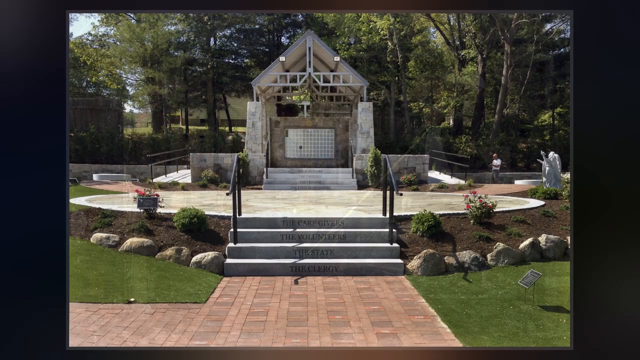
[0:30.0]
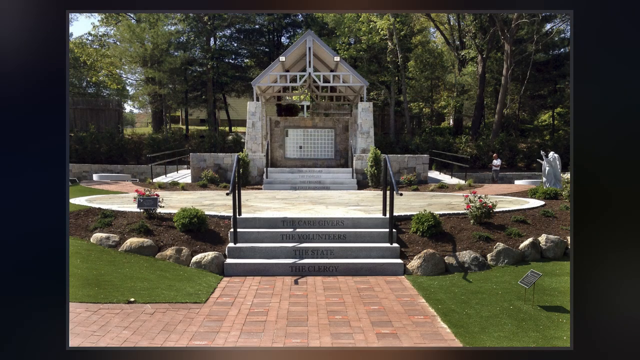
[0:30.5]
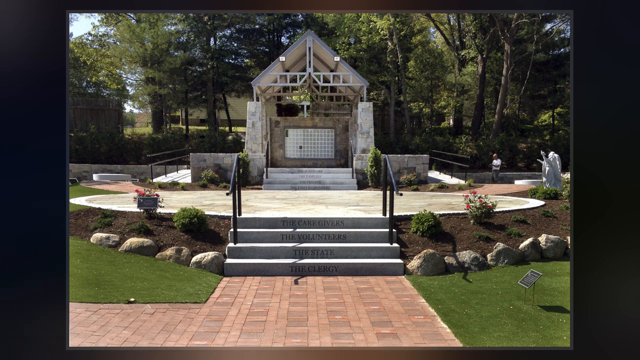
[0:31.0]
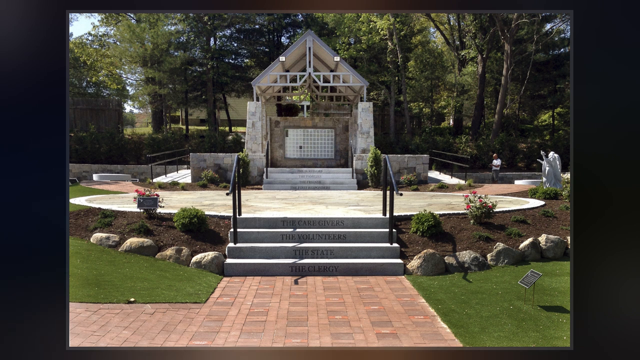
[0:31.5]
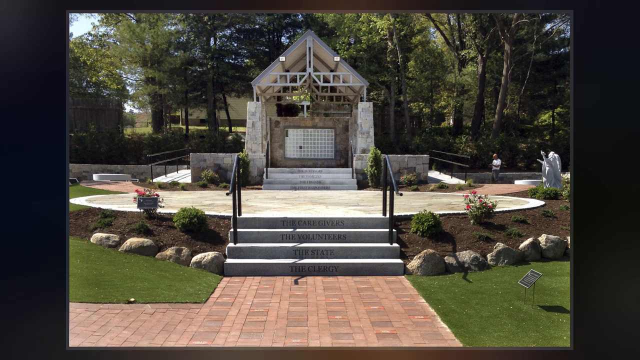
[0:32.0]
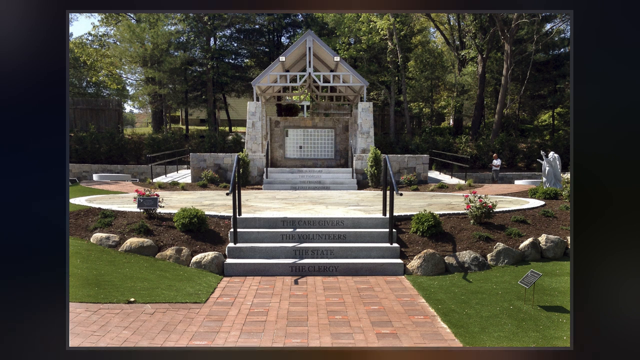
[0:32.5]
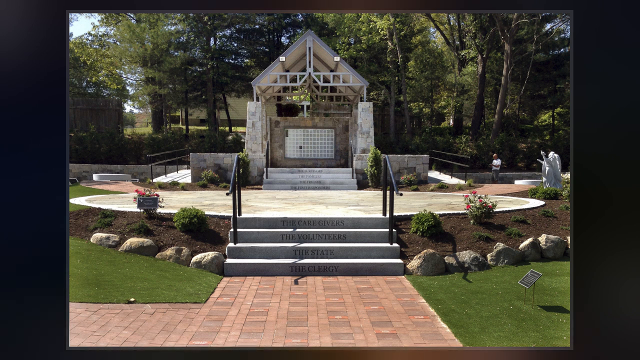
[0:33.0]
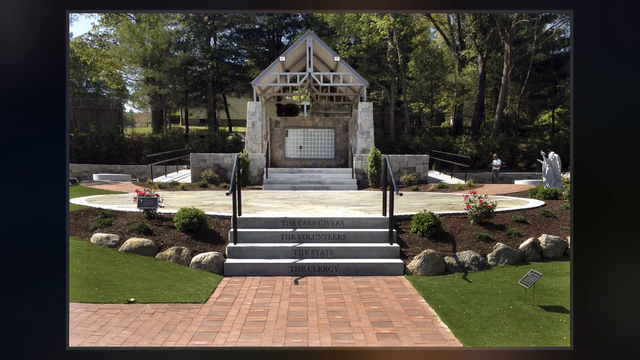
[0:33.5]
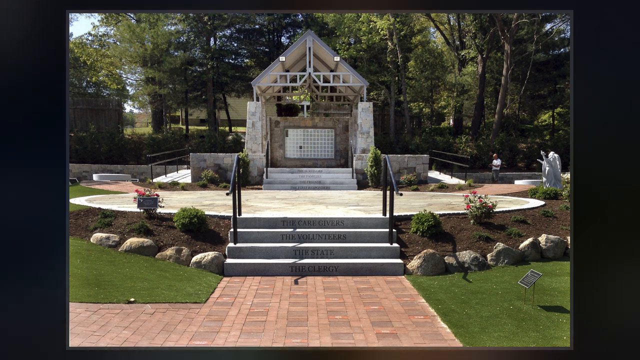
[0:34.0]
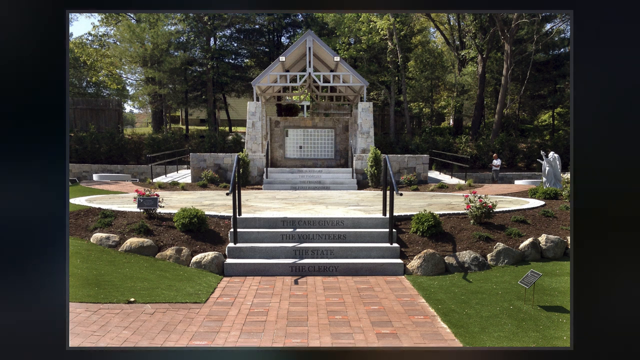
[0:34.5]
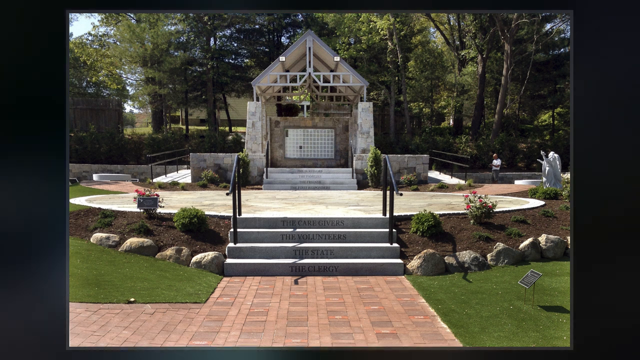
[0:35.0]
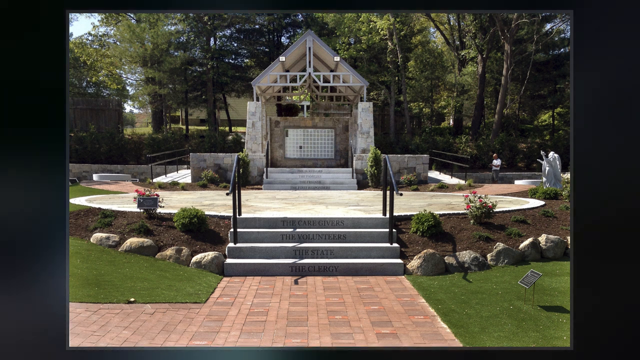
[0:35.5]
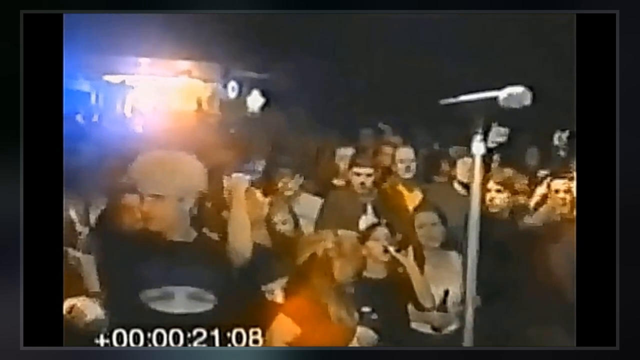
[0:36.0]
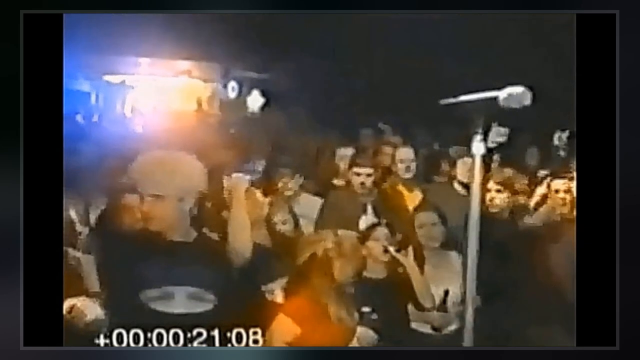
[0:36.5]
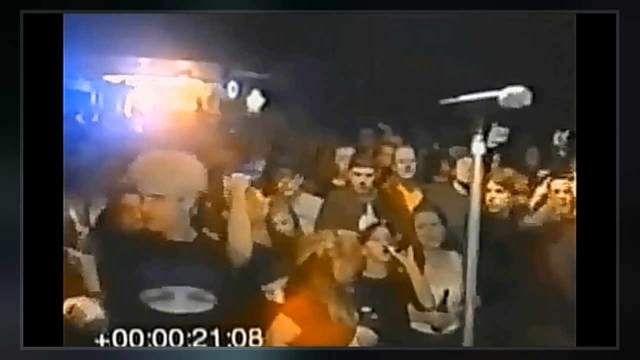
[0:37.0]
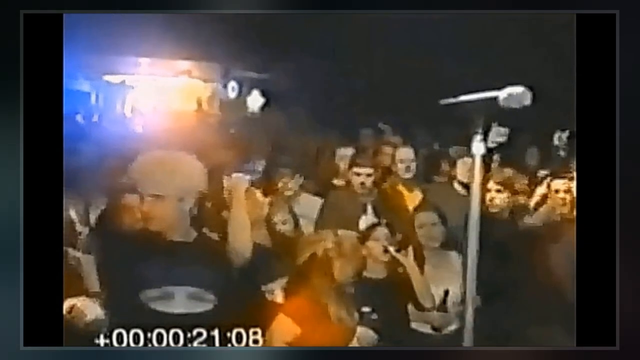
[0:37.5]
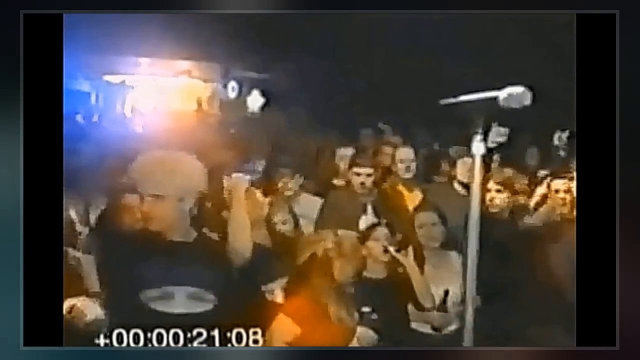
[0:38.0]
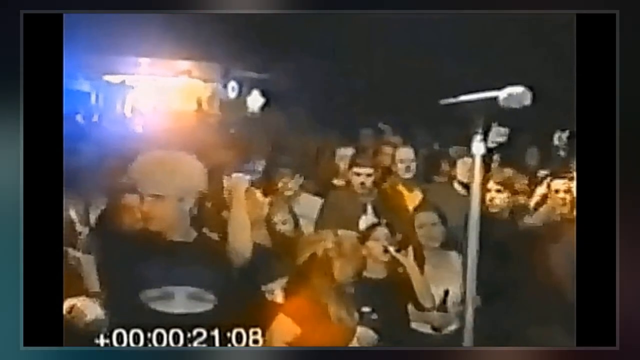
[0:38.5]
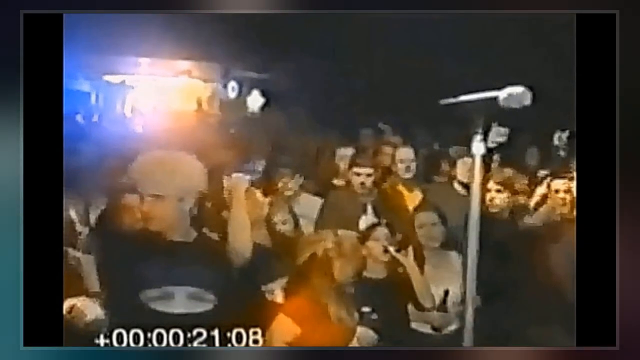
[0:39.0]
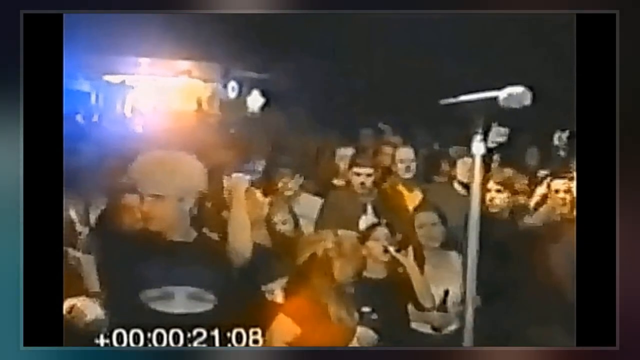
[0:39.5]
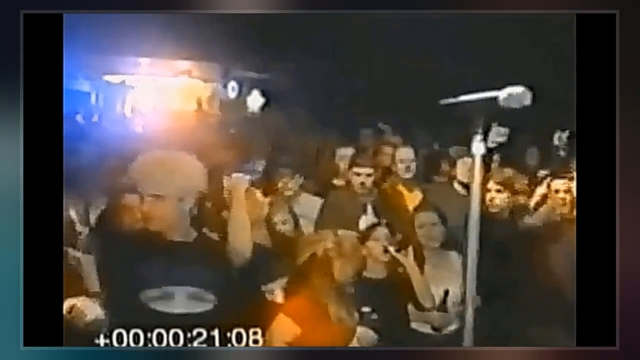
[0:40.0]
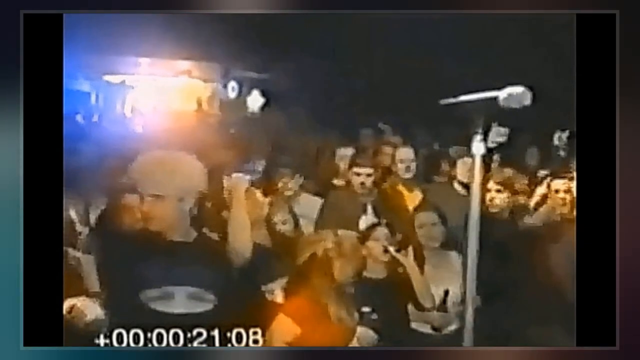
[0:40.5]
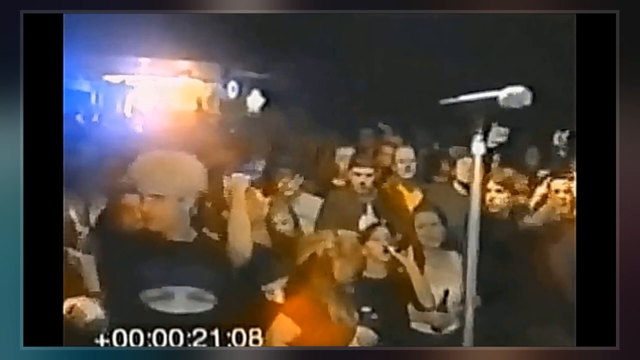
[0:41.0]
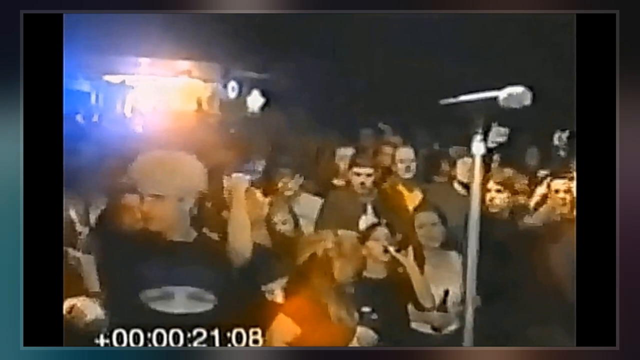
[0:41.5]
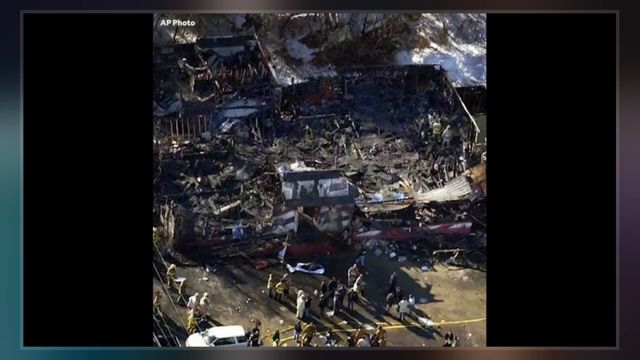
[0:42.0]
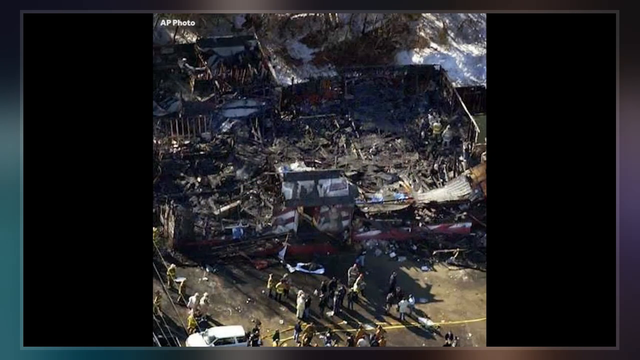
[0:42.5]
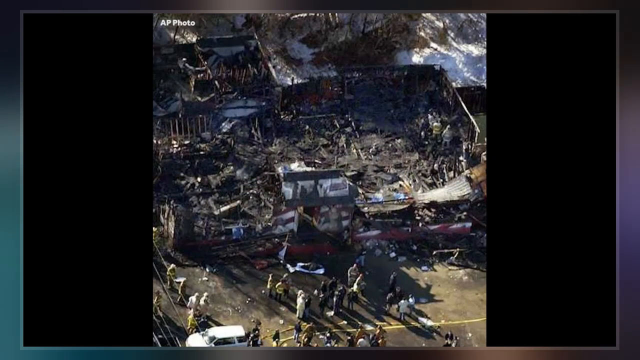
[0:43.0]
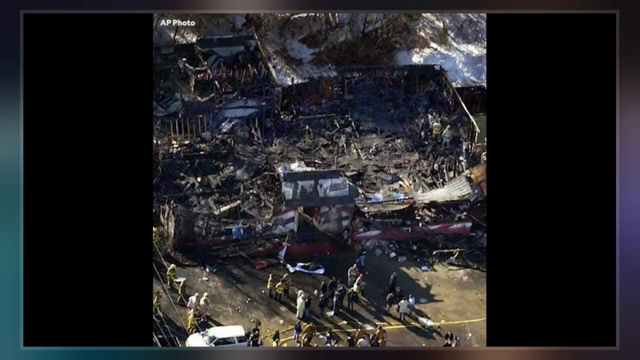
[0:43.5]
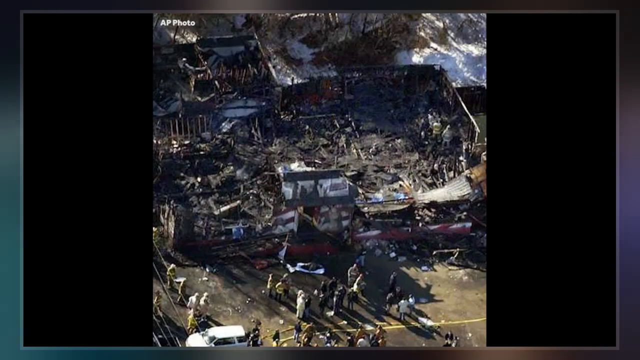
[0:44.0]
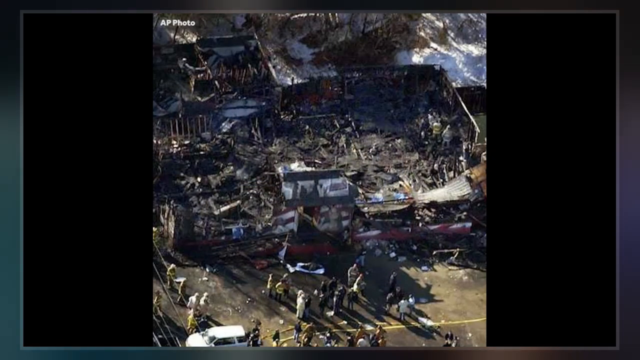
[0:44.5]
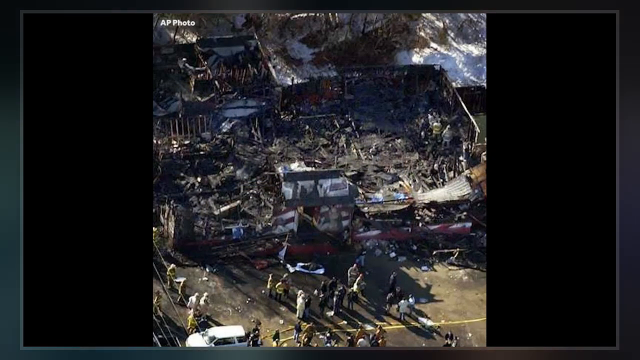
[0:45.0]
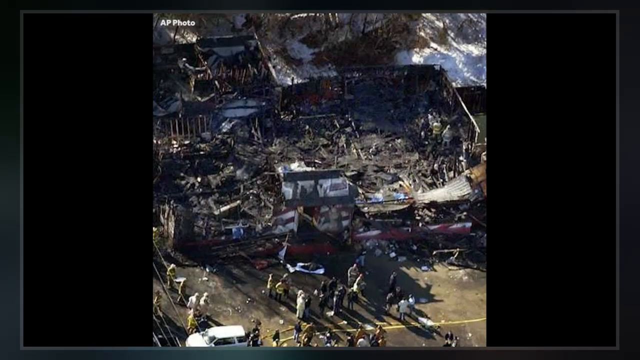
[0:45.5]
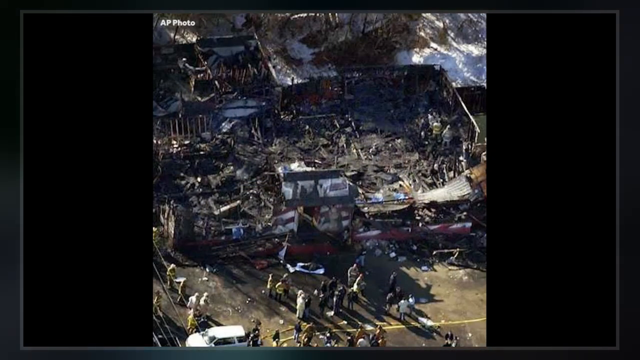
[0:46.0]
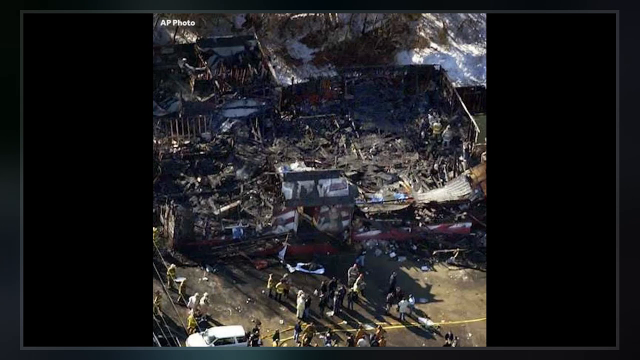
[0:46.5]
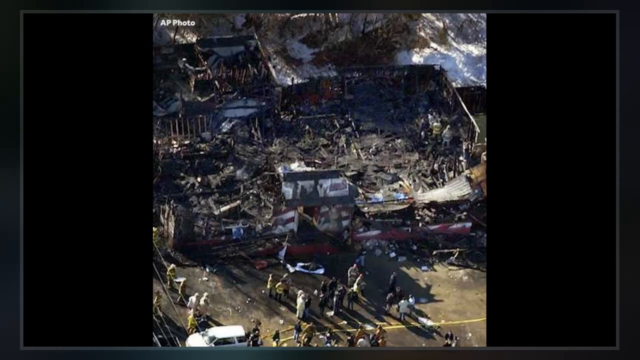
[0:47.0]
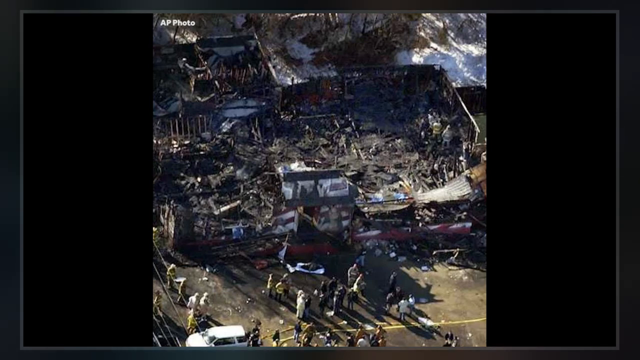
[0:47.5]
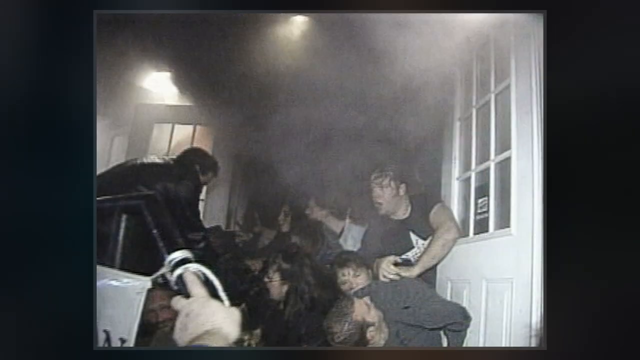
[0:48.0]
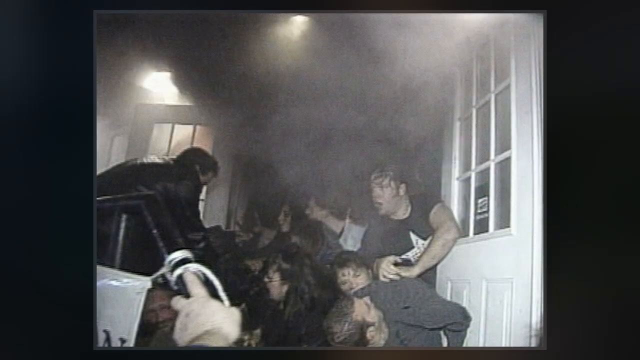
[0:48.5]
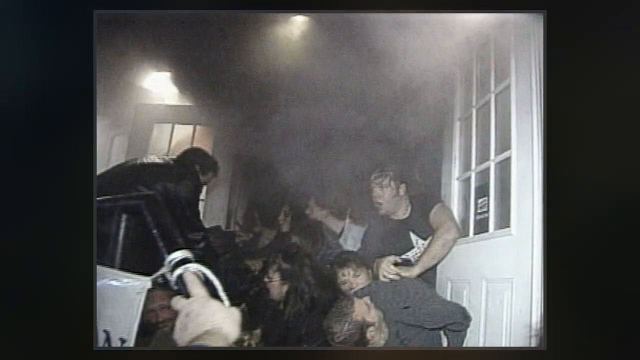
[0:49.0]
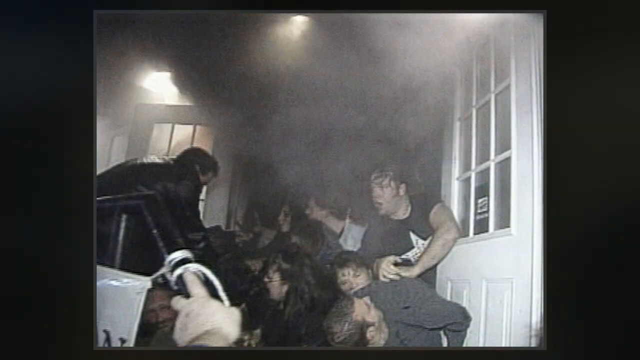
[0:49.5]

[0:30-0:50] A still image shows what looks to be either the remnants of an old church or perhaps a monument. Steps lead up to it with writing on them, each phrase on a different step: "the caregivers," "the volunteers," "the state," "the clergy." There are also some statues of angels around the outside, suggesting a religious element to the building. The video then cuts to a very poor-quality still image of a crowd, possibly at a concert. A microphone is at the front of the image, with a crowd of people around it as if waiting for somebody to perform. They look to be young people, and they are in a dark room. Someone down at the front is drinking. It looks to be perhaps a gig or some kind of concert.